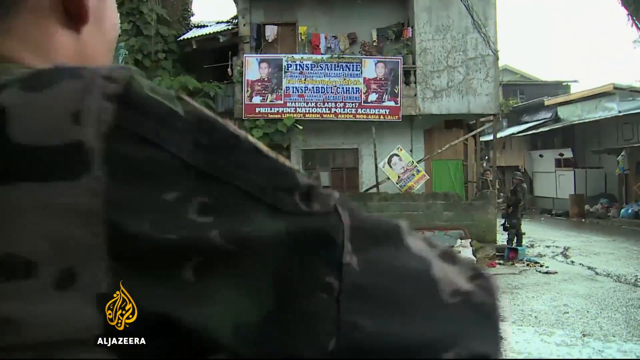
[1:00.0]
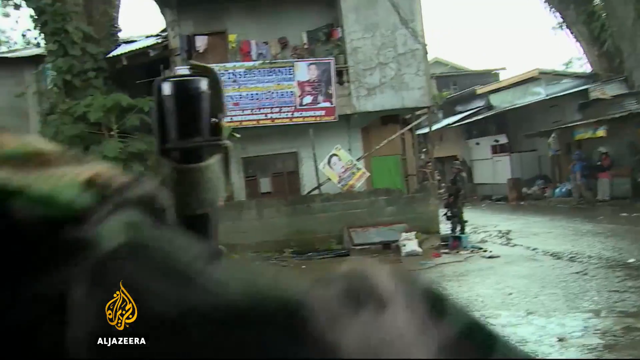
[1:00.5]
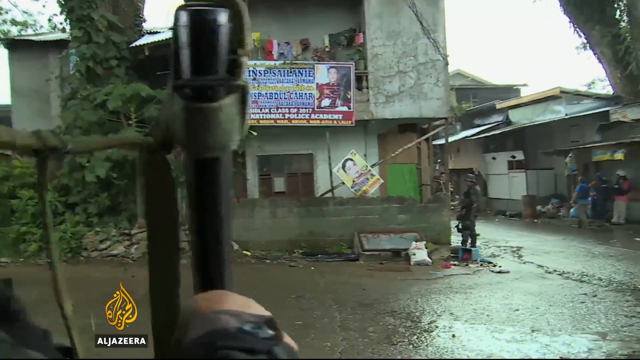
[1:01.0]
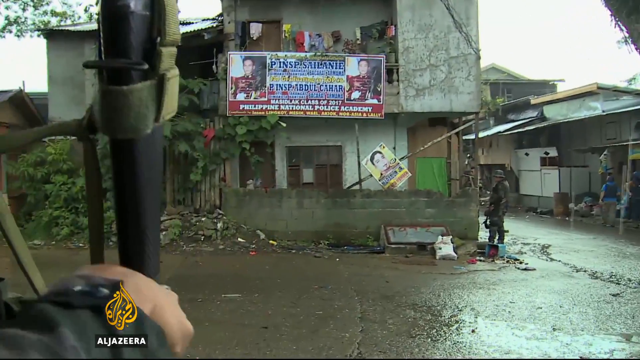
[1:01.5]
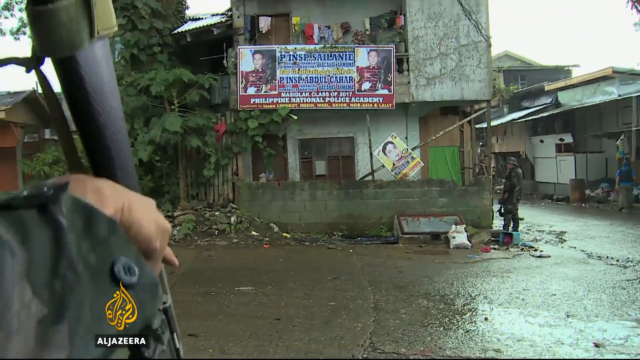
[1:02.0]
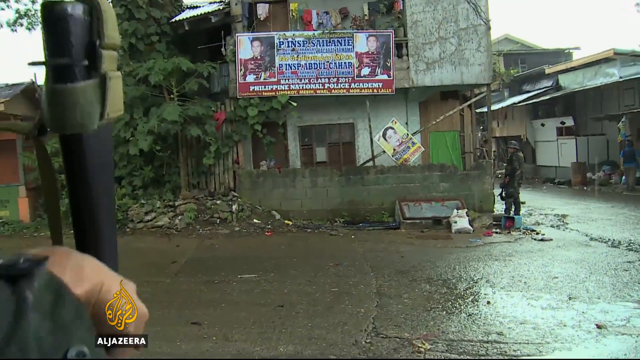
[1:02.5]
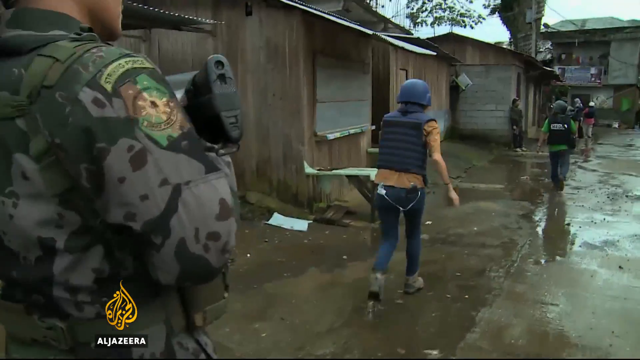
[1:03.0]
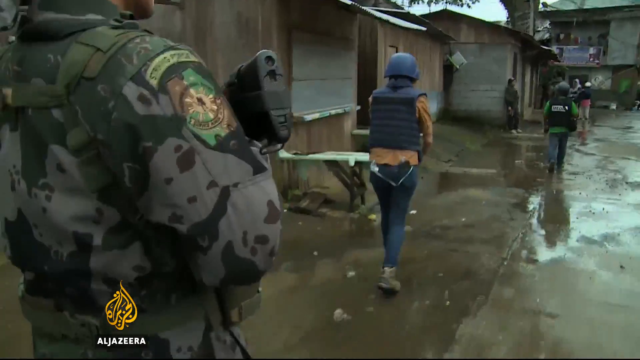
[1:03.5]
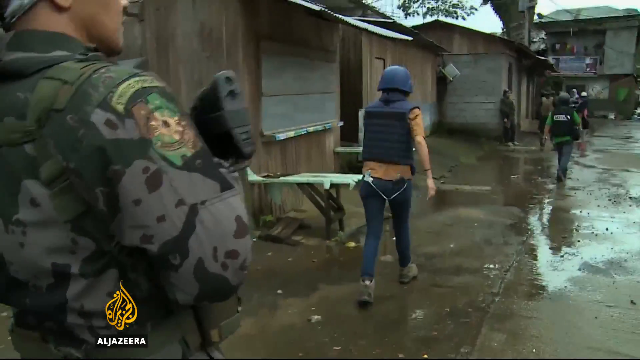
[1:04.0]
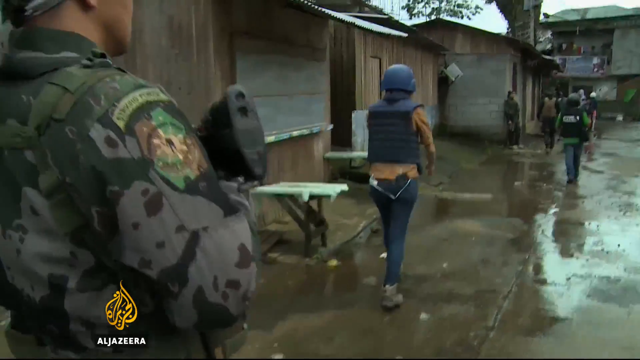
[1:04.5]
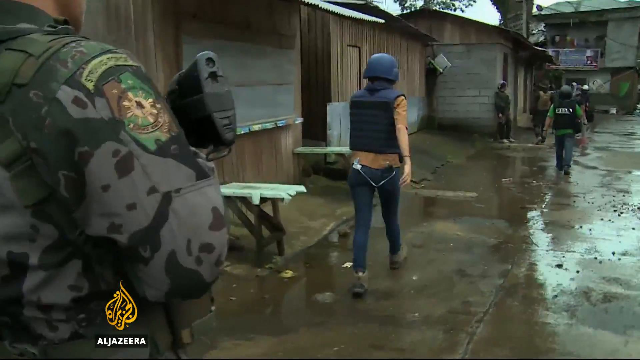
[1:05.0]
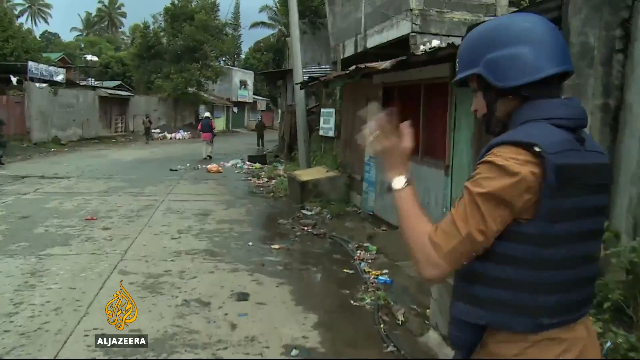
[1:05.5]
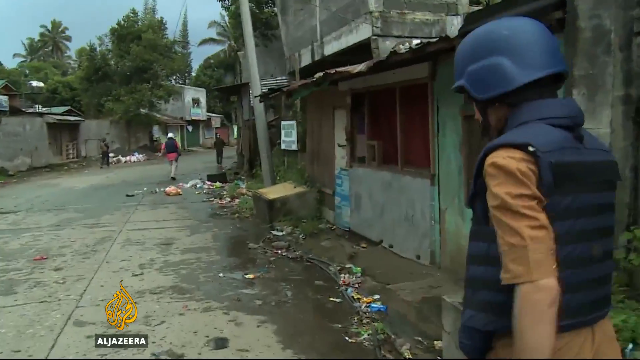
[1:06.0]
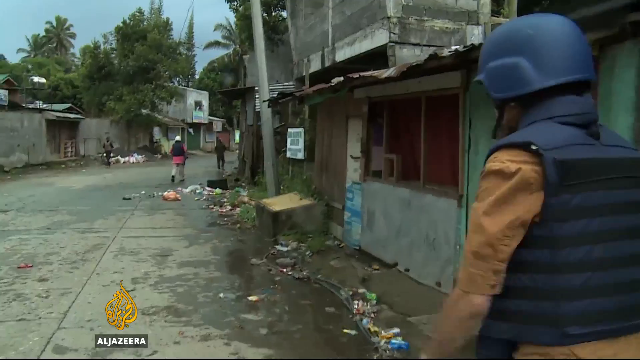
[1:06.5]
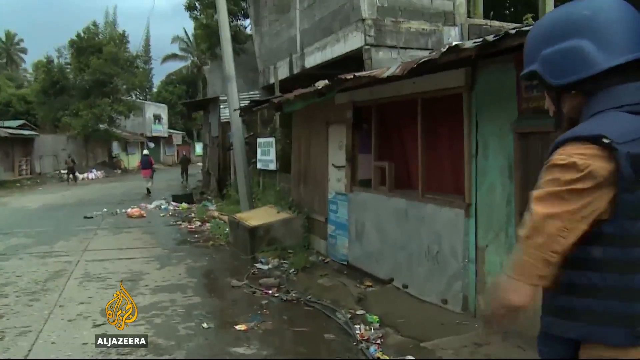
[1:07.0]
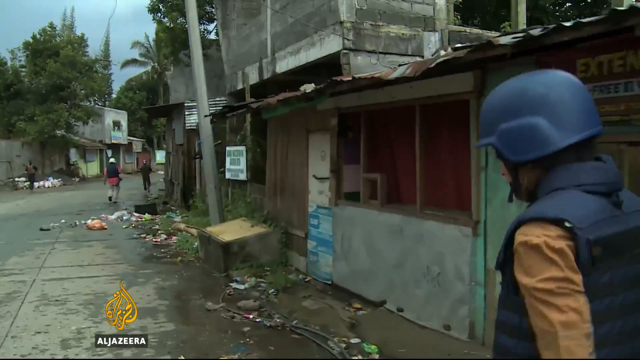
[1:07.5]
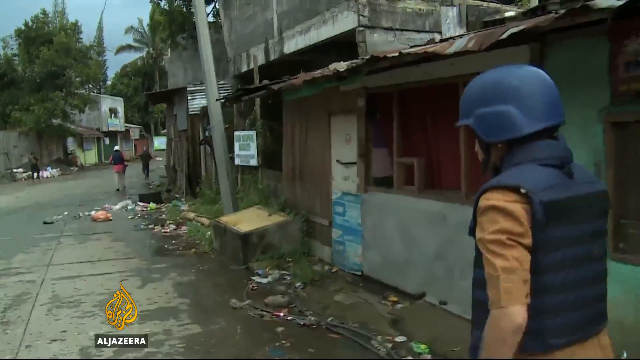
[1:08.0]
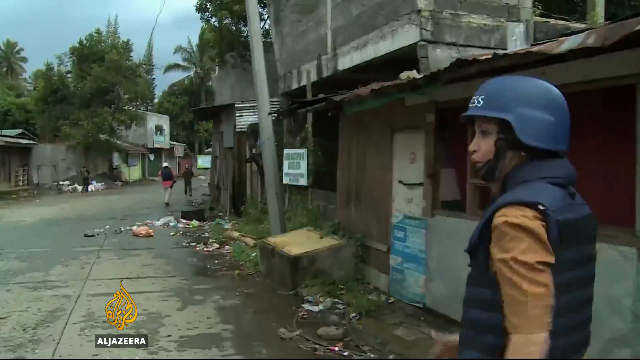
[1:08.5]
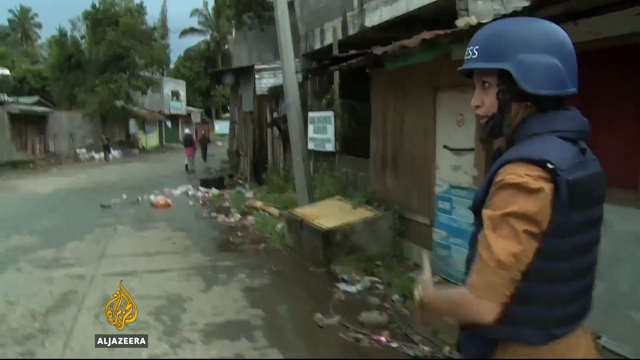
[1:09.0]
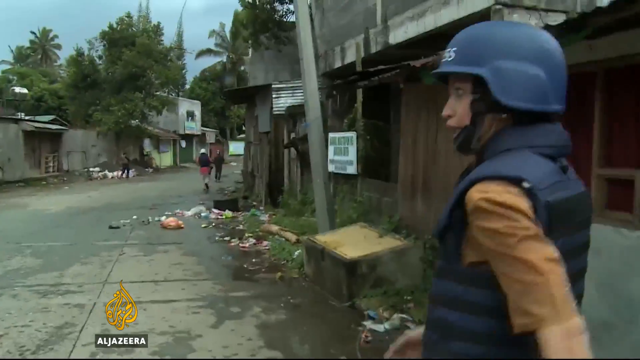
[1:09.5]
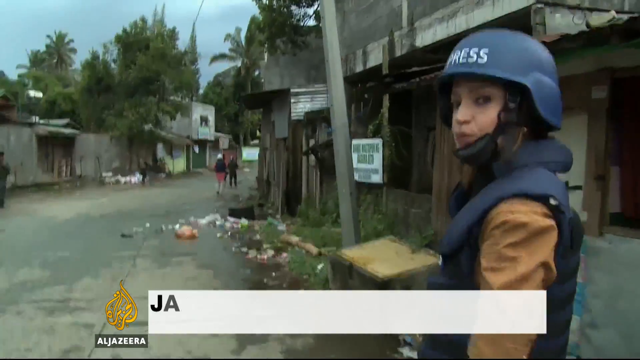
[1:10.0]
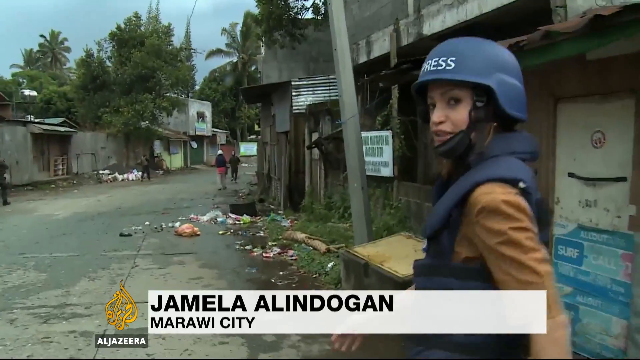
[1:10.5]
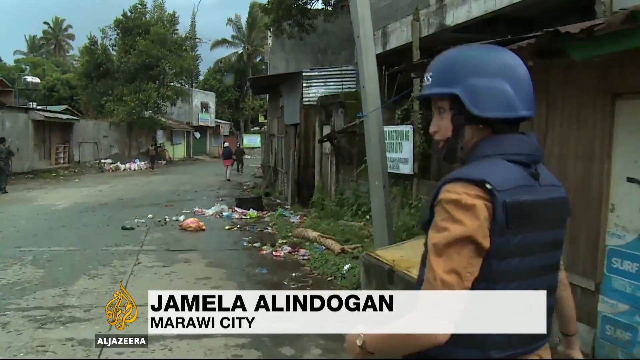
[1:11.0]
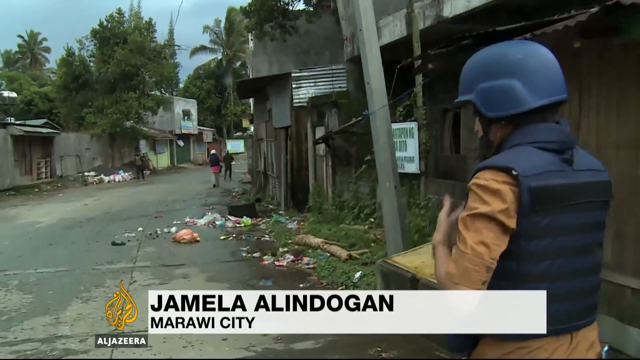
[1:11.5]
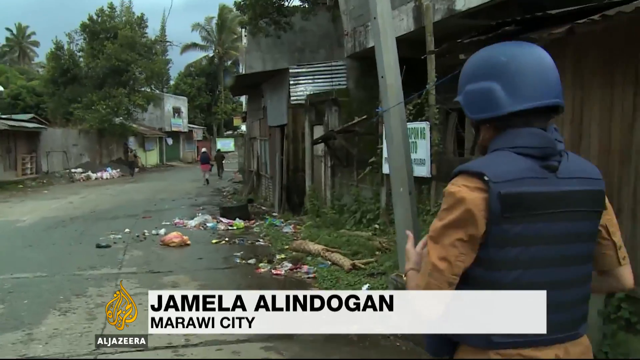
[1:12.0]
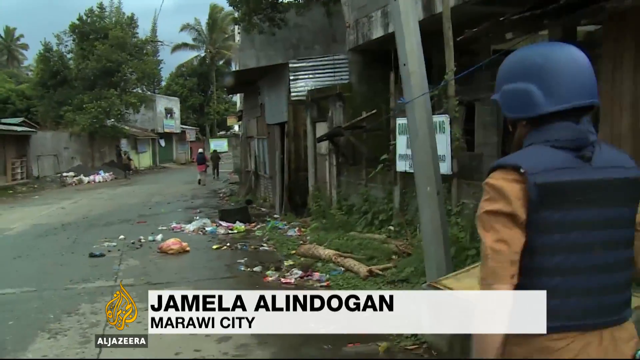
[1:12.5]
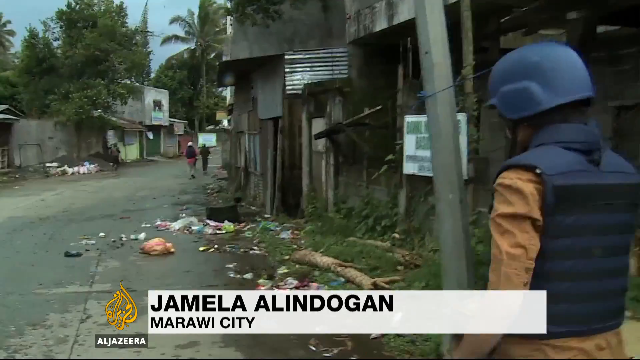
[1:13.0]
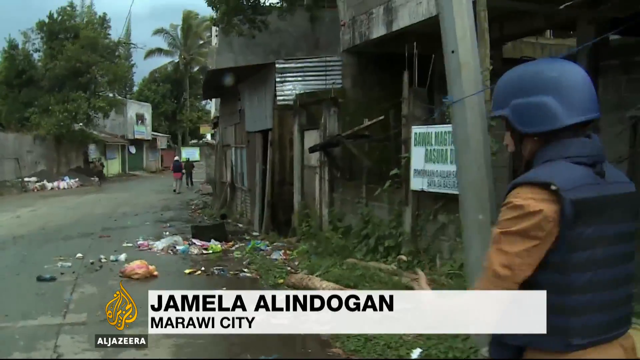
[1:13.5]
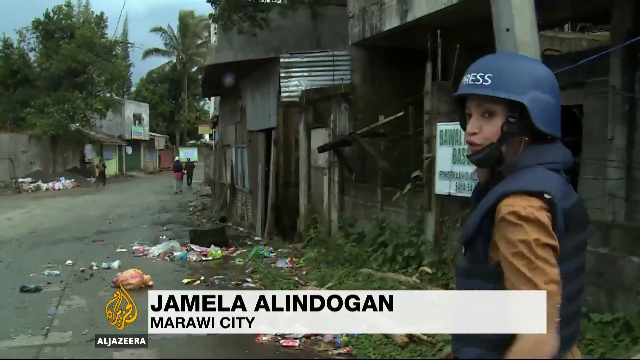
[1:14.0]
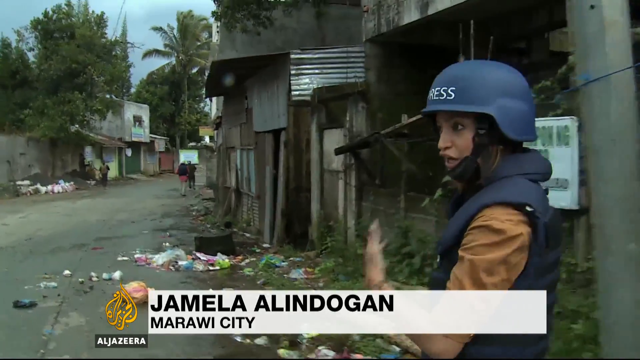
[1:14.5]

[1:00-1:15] Military members shoot at various spots. The reporter, Jamila Alindugan, wearing a flak vest and helmet, walks along and speaks to the camera as the camera follows her down an abandoned city street with trash strewn on the ground in the rain. It is not clear whom the soldiers are pursuing. A couple of people in the distance look like civilians, though they may be part of her camera crew.